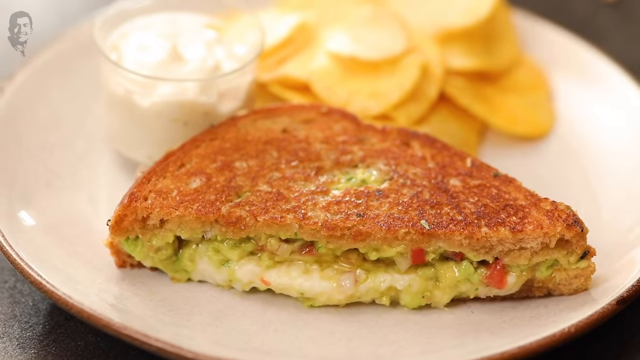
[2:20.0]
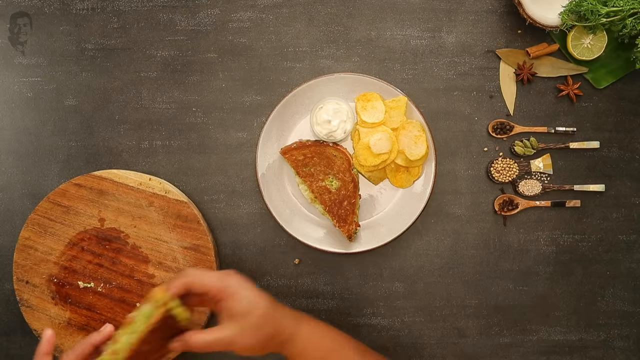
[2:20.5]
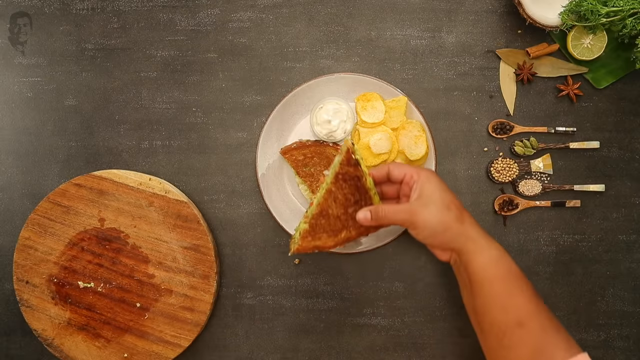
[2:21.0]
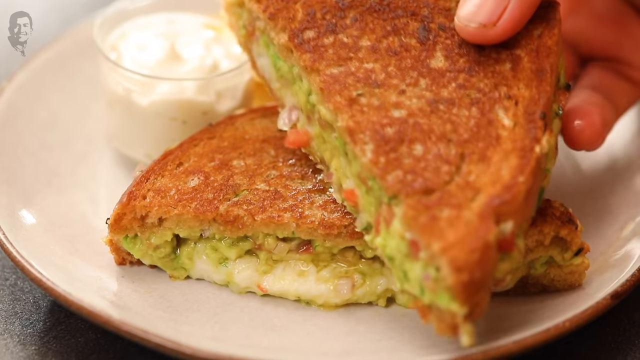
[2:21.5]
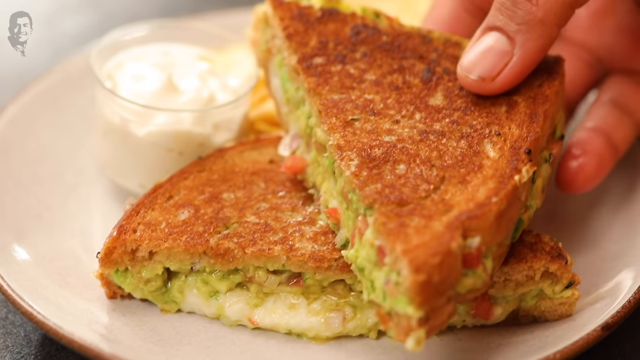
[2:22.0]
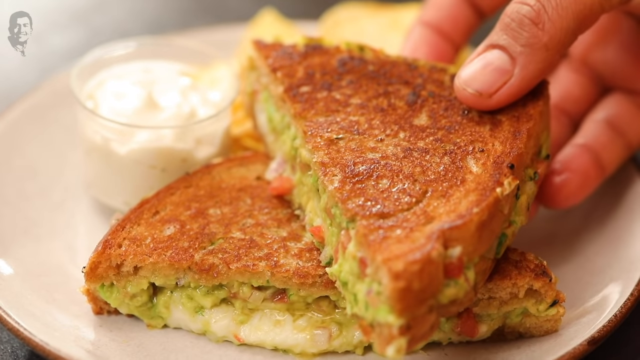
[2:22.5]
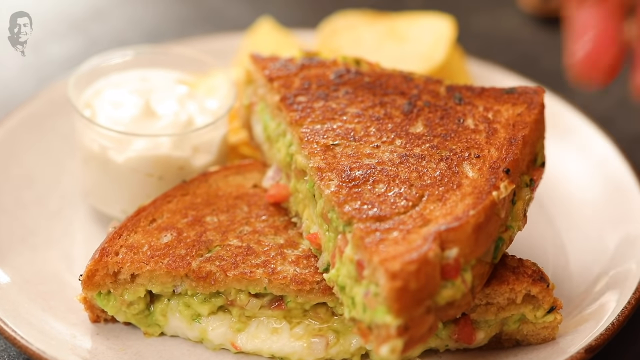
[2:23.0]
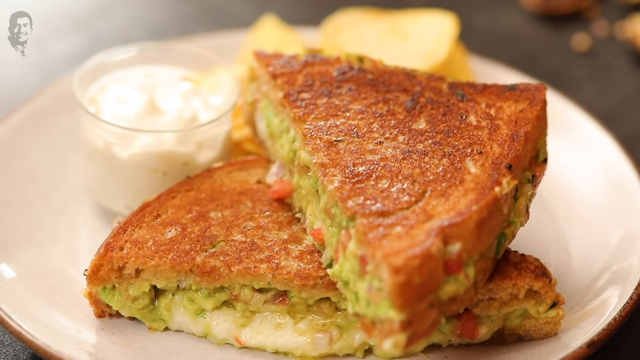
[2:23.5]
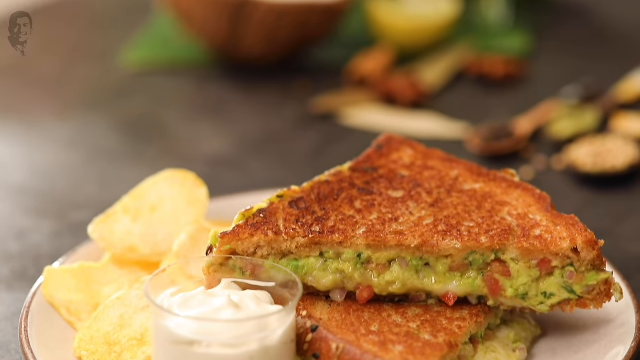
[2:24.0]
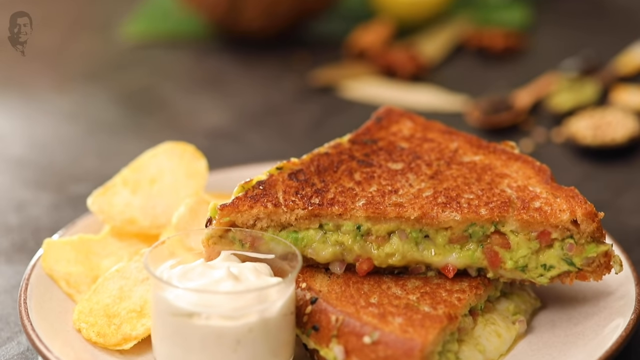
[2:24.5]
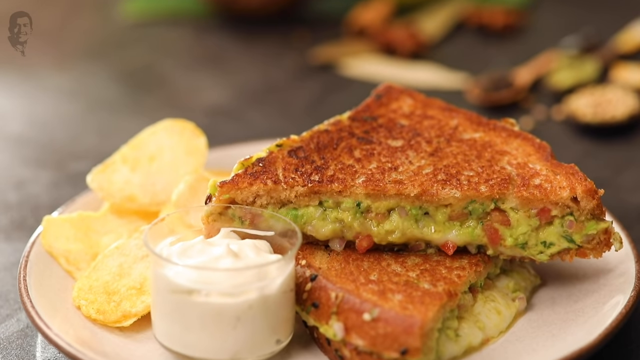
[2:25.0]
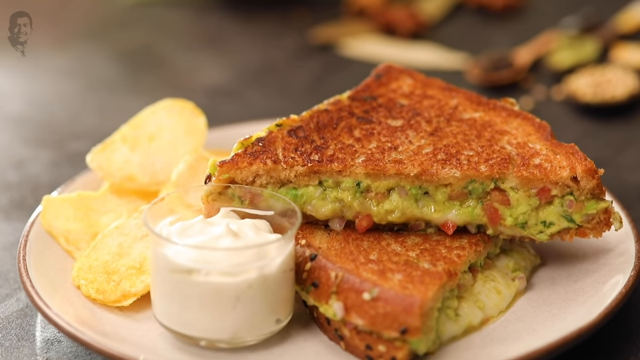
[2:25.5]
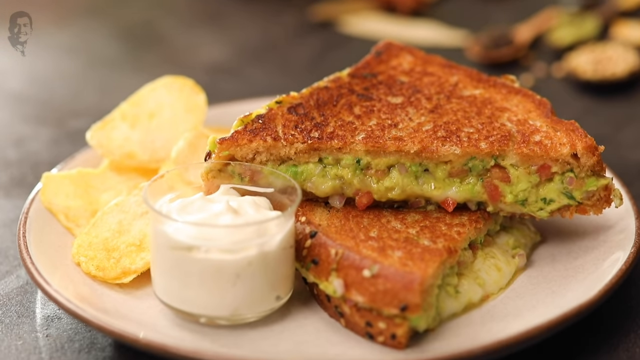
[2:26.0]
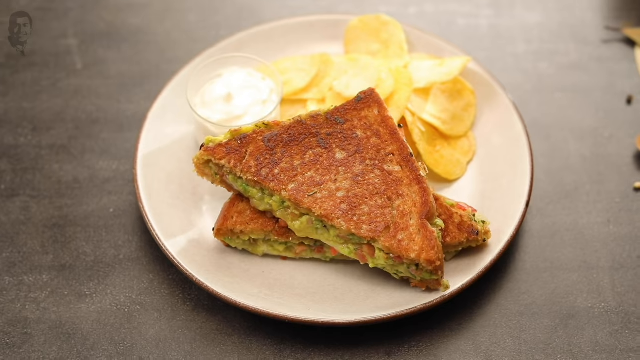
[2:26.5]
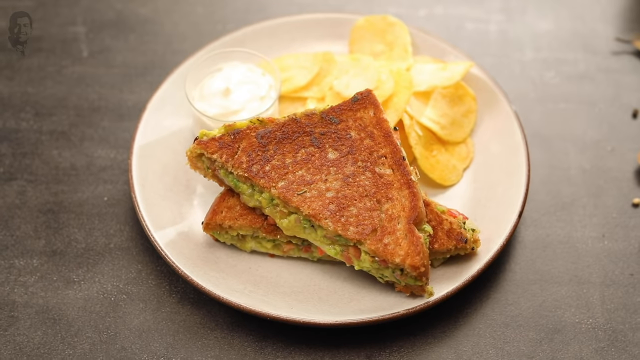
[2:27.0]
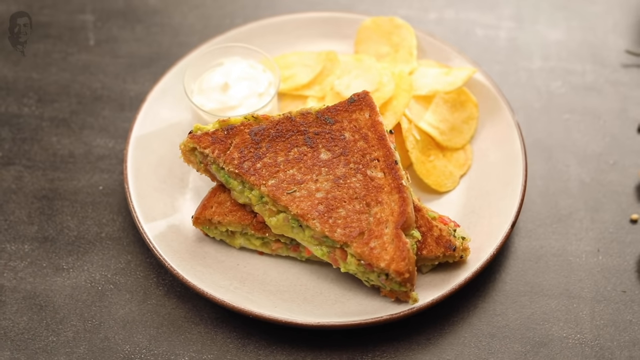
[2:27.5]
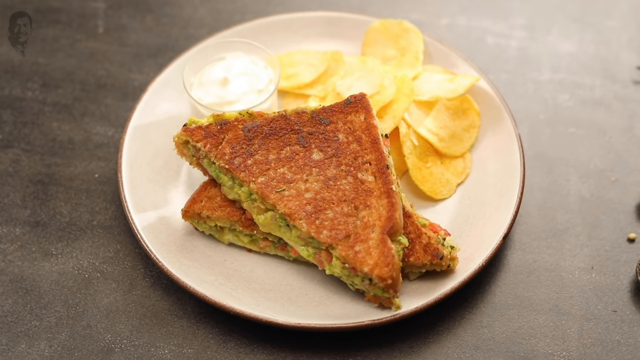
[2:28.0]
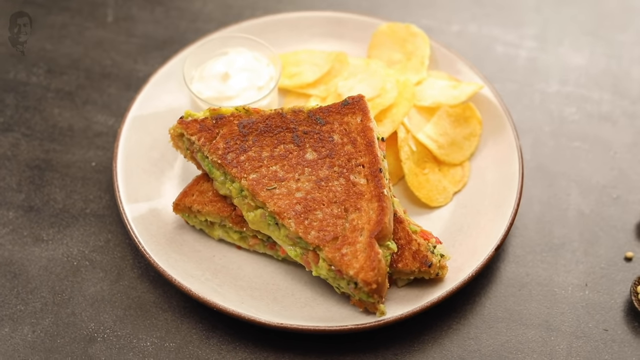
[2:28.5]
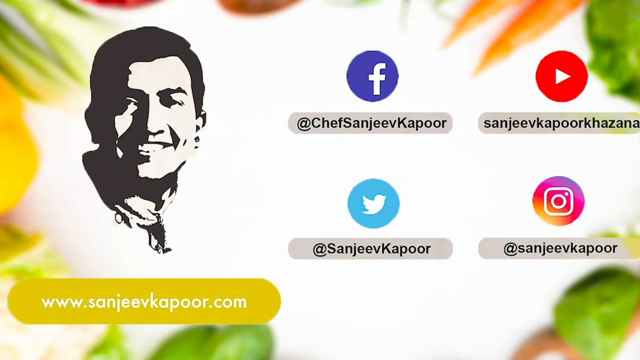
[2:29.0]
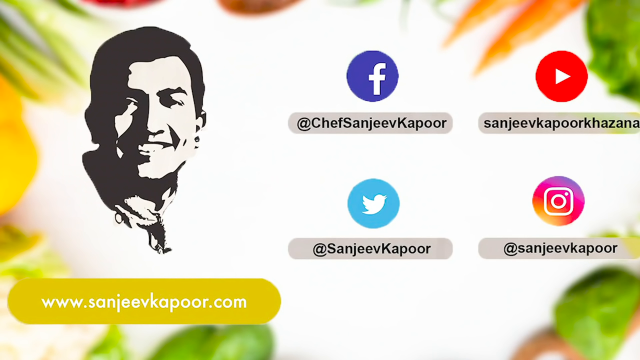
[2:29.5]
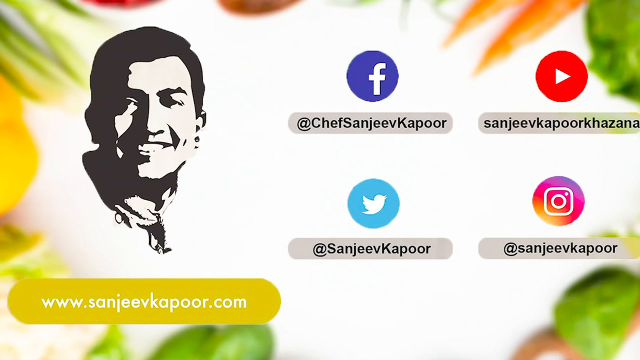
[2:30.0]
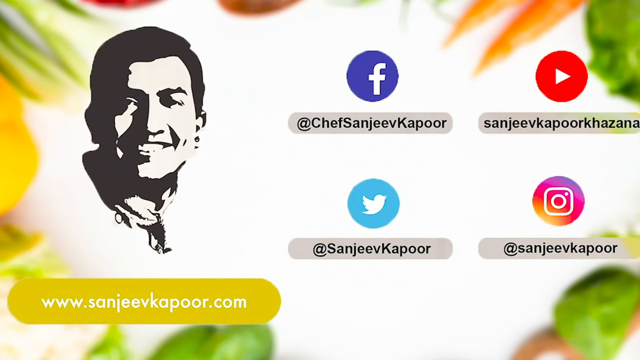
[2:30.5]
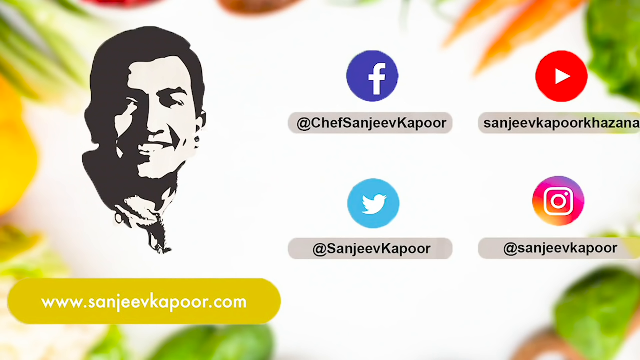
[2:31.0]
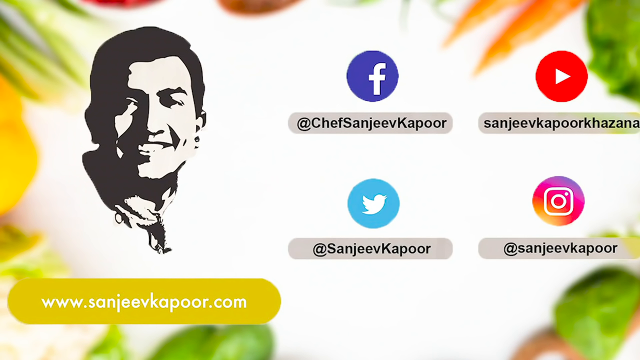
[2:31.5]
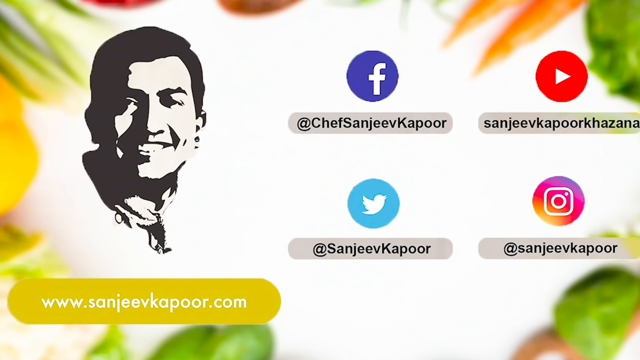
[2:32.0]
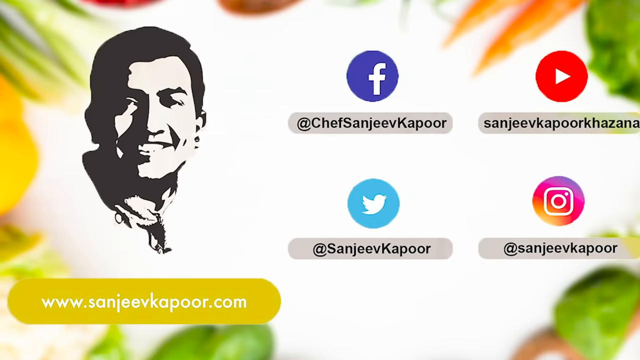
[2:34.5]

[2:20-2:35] The white plate holds one half of the cheesy avocado toast along with the potato chips and the white creamy stuff, while the other half is on the brown round cutting board. The woman takes the second half and puts it diagonally on top of the first half on the plate, making a complete sandwich. The cutting board is now empty except for some grease. Off in the corner, the seasonings in the small measuring spoons are still there; she did not use them. The camera circles around the sandwich to show all sides. The avocado is between two pieces of brown, toasted bread, and some red onions or red herbs can be seen in it. The finished plate is colorful.